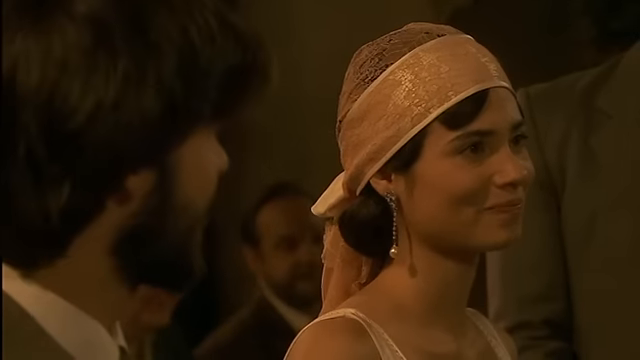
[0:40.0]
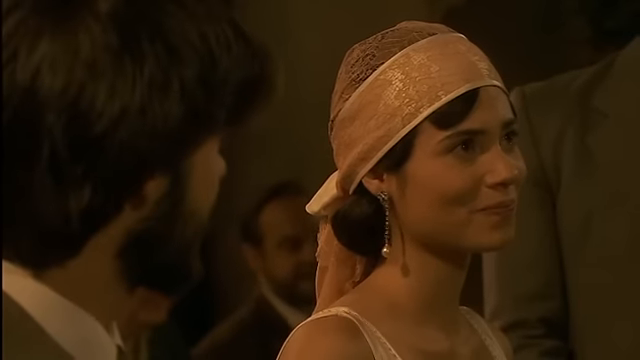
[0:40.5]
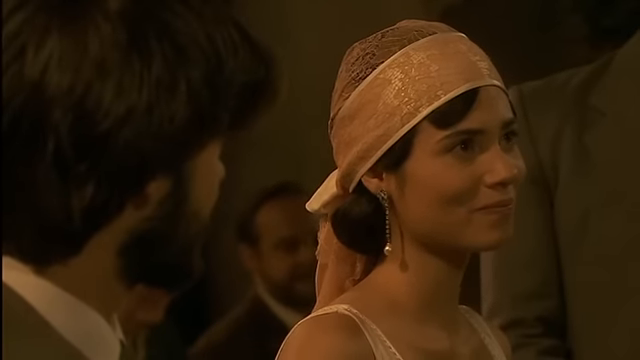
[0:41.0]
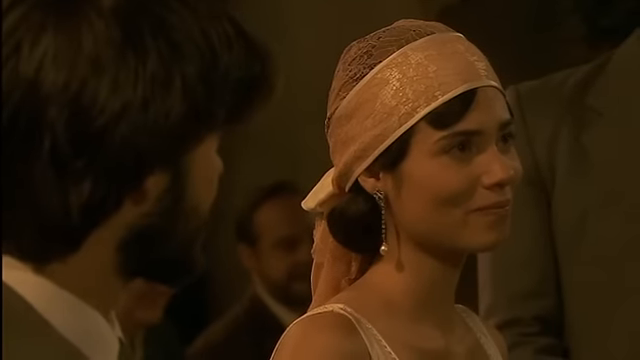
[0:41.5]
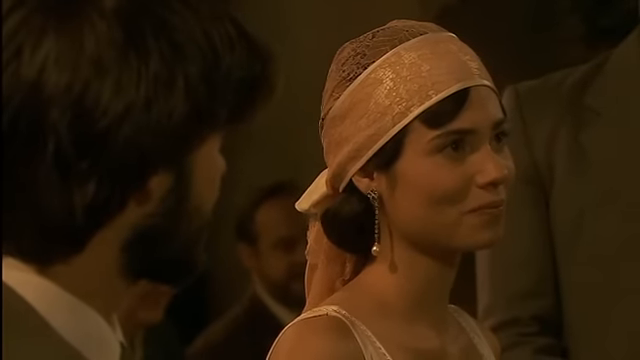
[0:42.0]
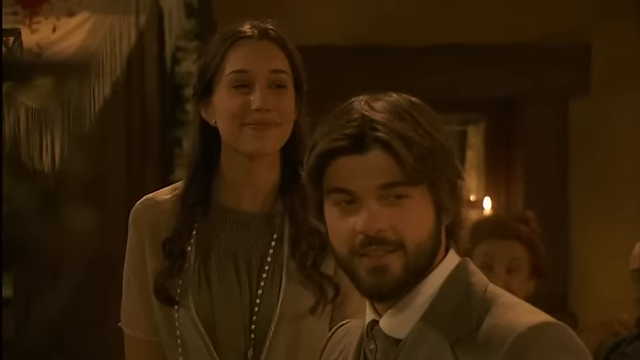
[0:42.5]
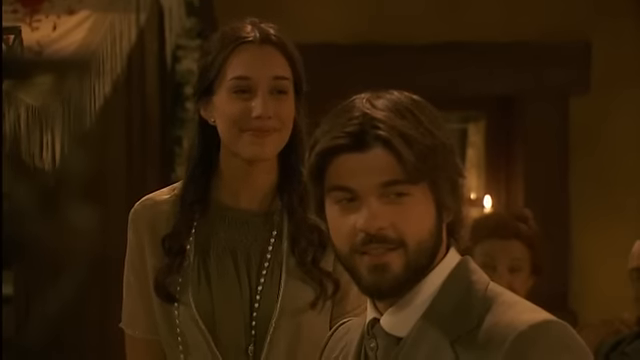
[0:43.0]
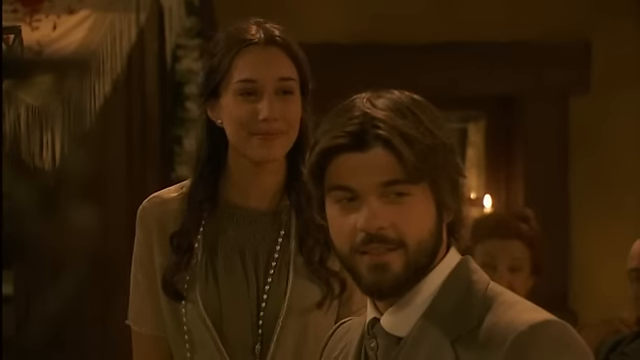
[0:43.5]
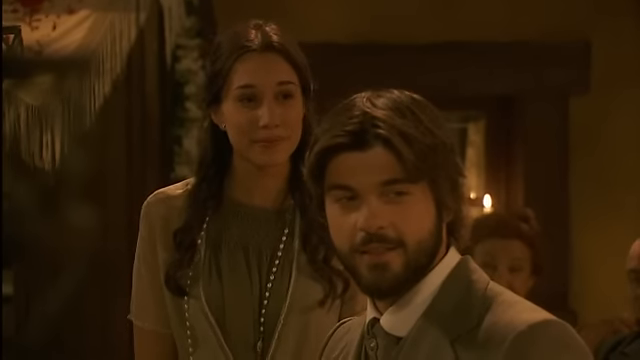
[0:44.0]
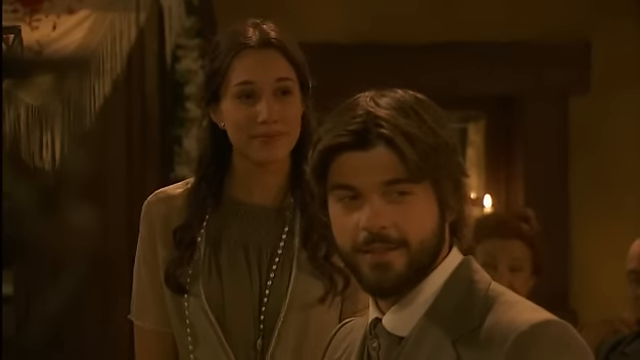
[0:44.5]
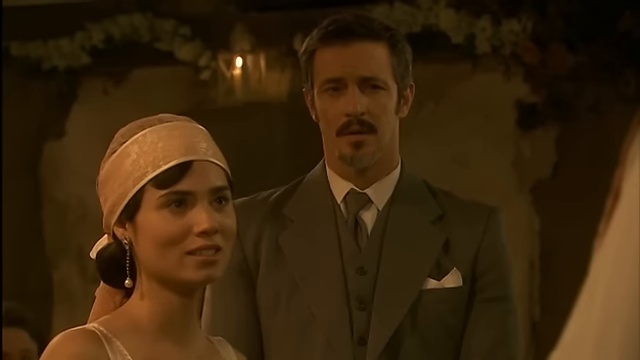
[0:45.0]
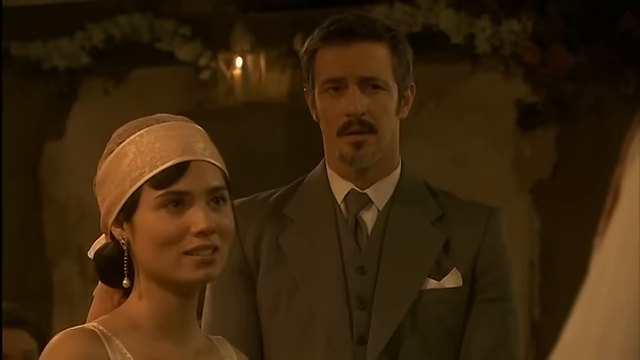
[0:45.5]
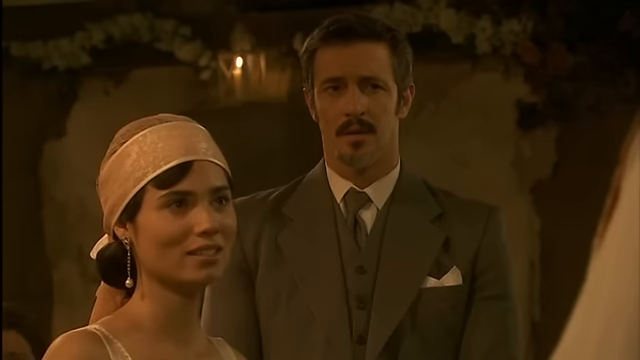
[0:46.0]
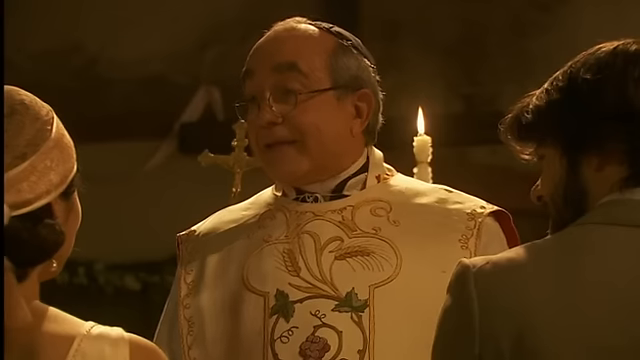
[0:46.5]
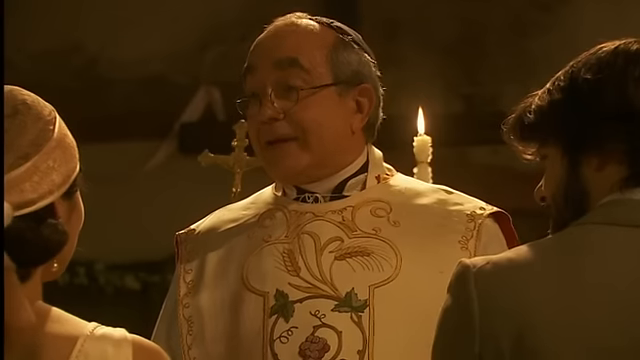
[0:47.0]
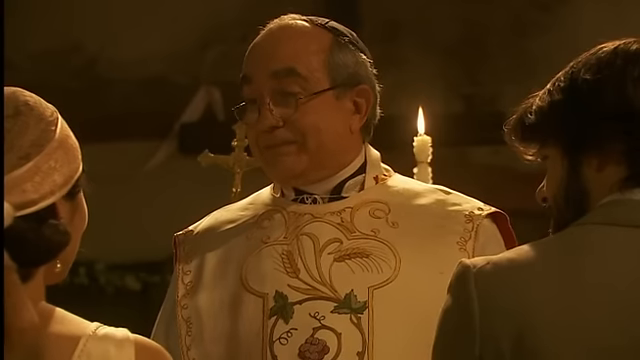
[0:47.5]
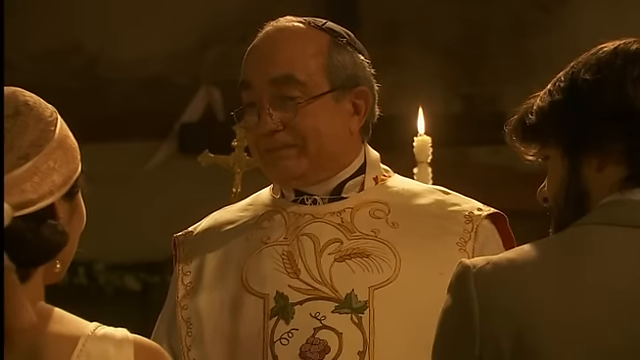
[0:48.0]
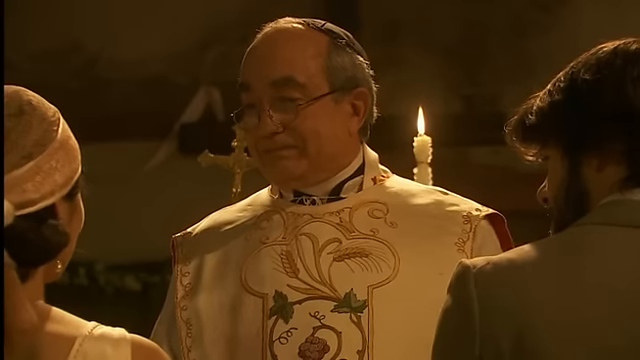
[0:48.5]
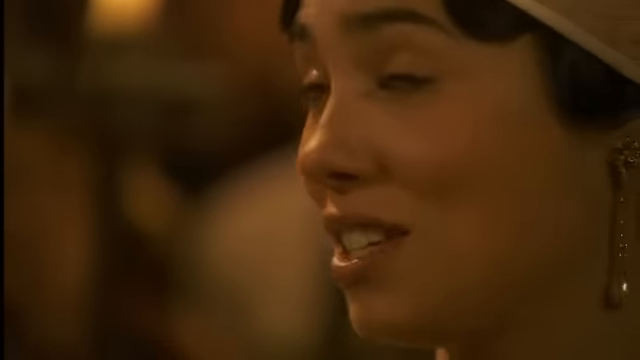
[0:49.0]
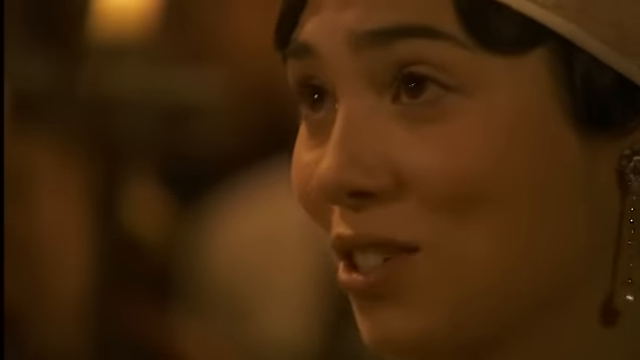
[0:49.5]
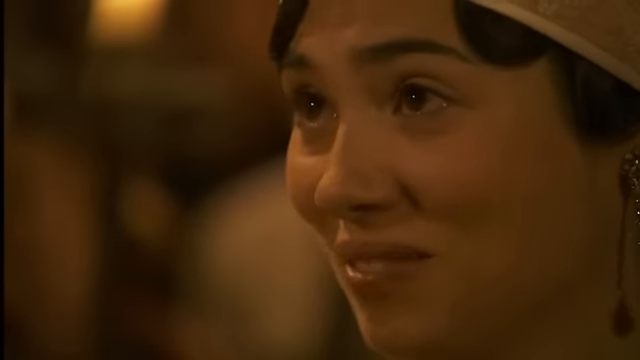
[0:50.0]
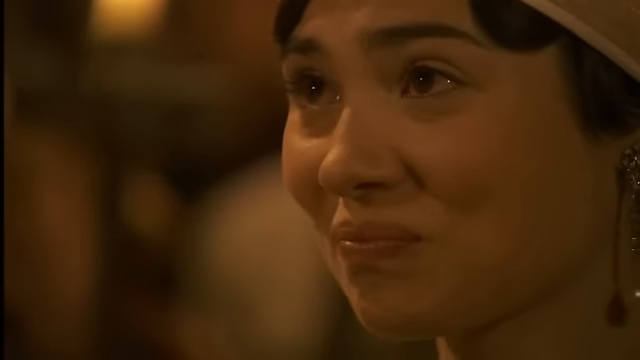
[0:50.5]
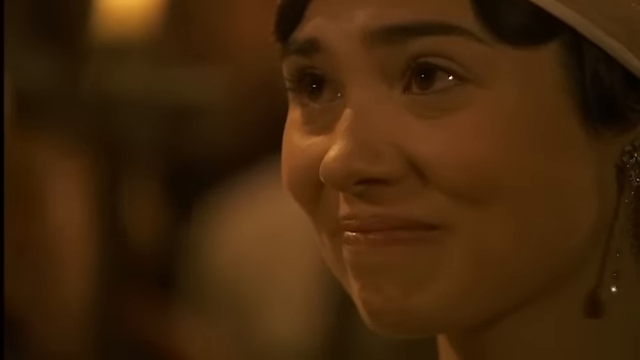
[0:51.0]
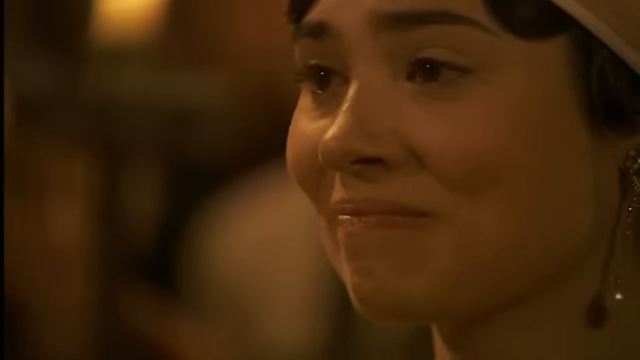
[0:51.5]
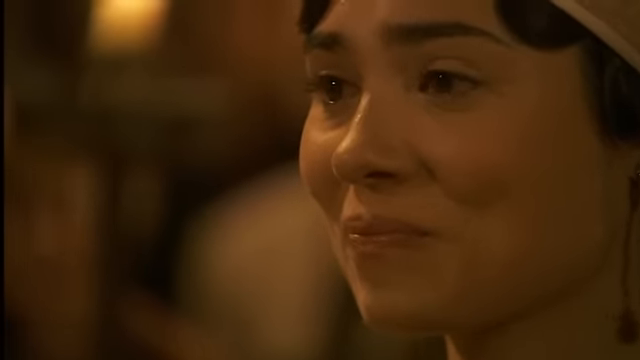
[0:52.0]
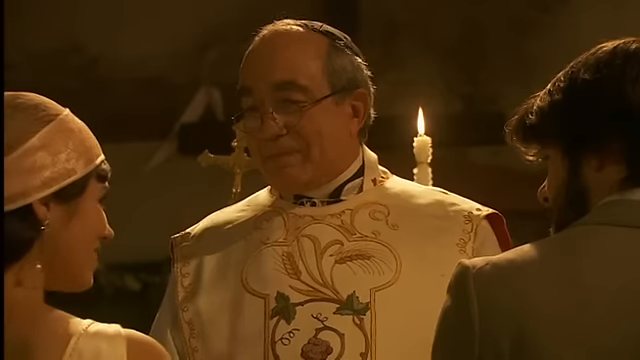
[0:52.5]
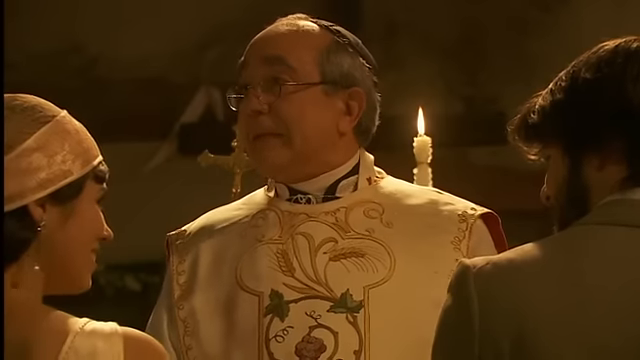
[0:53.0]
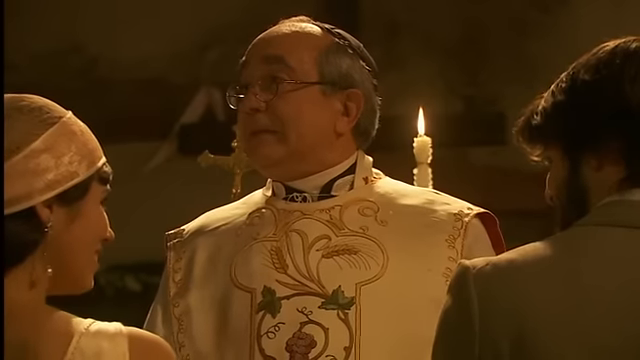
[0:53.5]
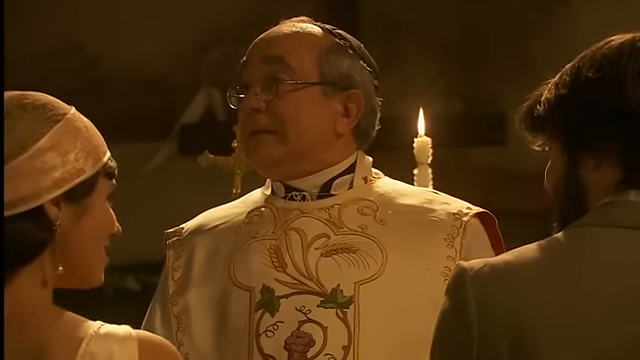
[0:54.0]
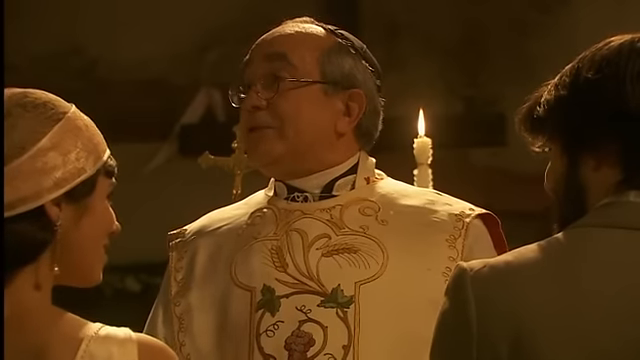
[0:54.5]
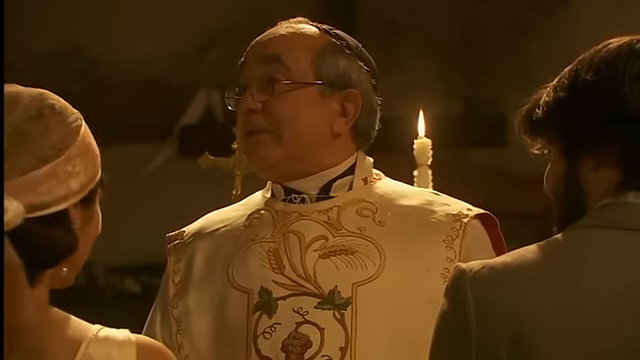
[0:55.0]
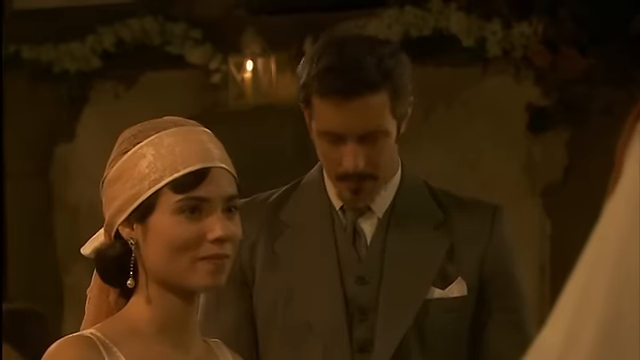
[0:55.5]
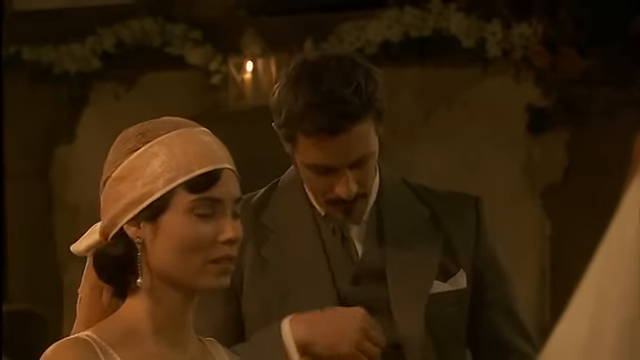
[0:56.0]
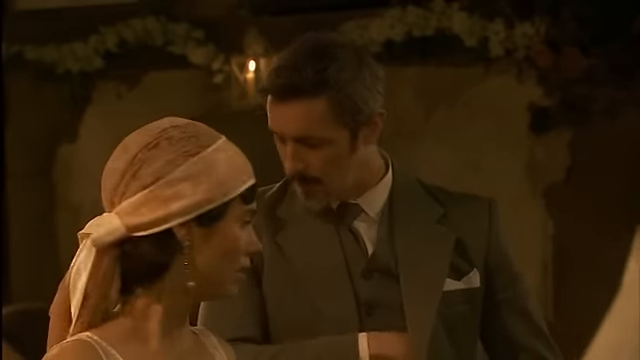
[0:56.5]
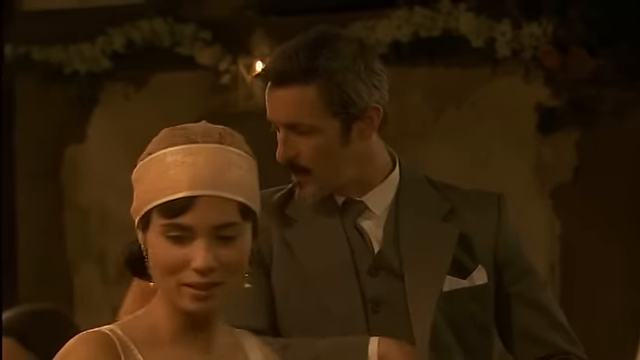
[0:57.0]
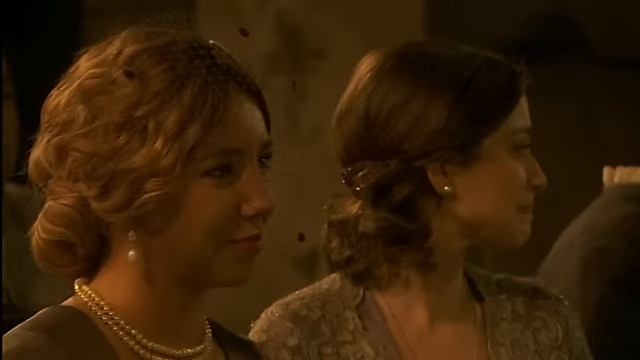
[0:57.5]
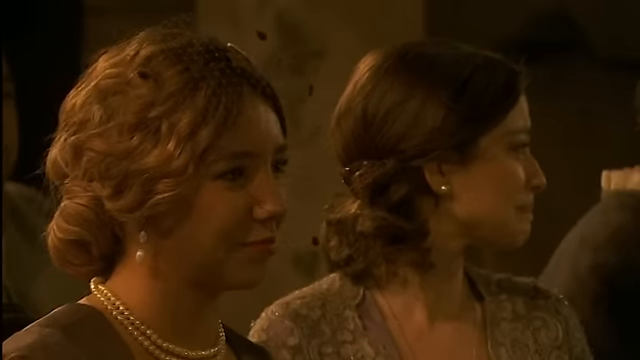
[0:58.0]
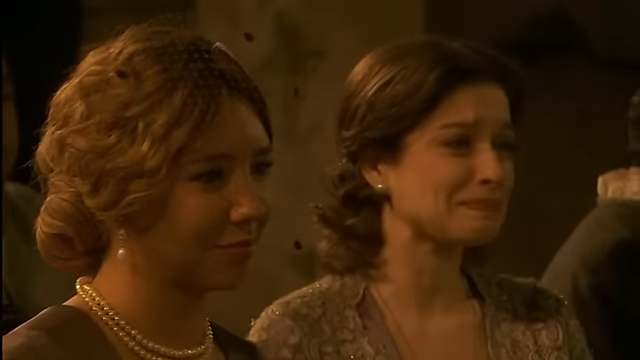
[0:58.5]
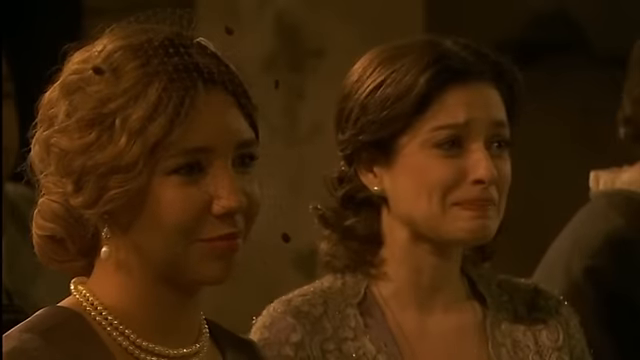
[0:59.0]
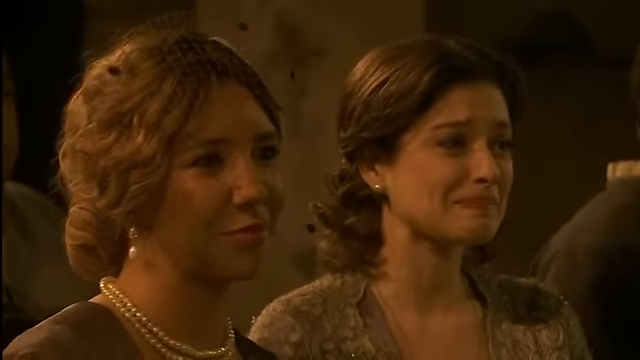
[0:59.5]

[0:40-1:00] The priest speaks to the lady with the headdress and drop pearl earrings. She seems to be half-heartedly smiling, looking around, smiling and semi-crying. The priest asks her again if she is sure, and she nods her head in agreement. He then looks at the gentleman to her left, who wears either a dark green or gray suit and starts looking around inside his jacket. The shot goes to two women in the crowd, one crying and one smiling, and then back to the two people standing in front of the priest behind some chairs. Of the two women, the lady on the left has blonde hair in a low bun with a net in front of her face, seems a little more uppity, and wears drop pearl earrings and a pearl necklace. The lady on the right seems a little more homely, wears more muted clothing and pearl earrings that are not dropped, and has her hair in a short brown bob pulled back.